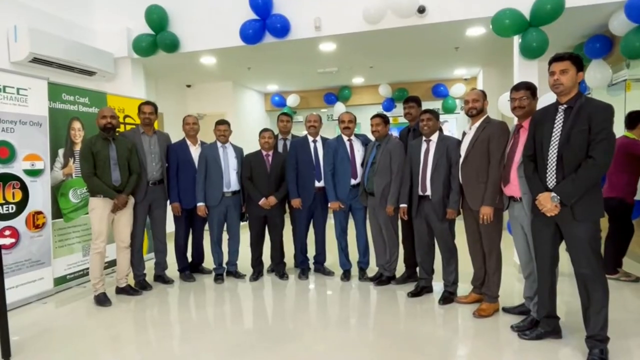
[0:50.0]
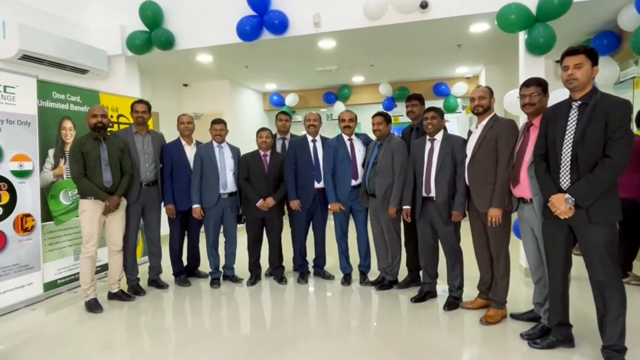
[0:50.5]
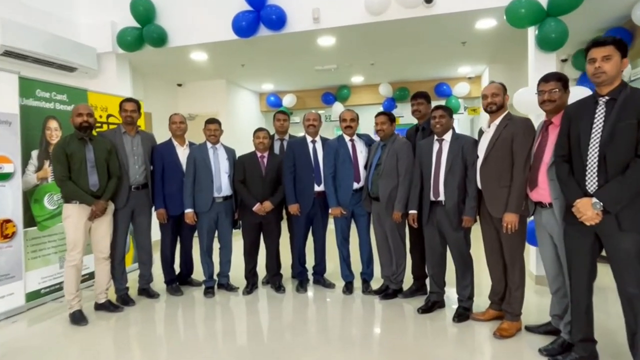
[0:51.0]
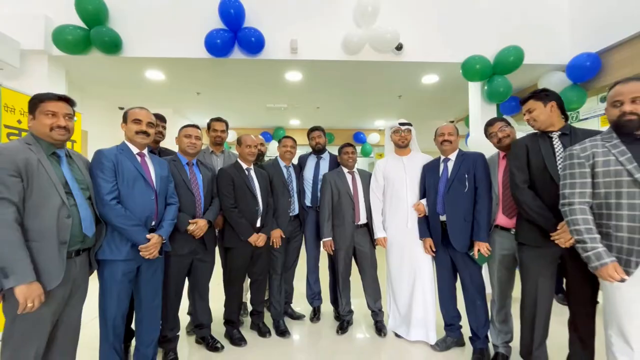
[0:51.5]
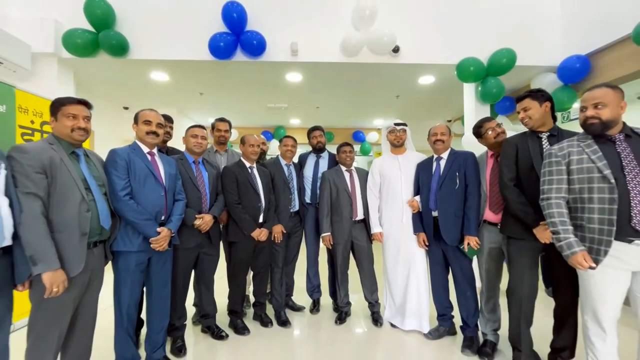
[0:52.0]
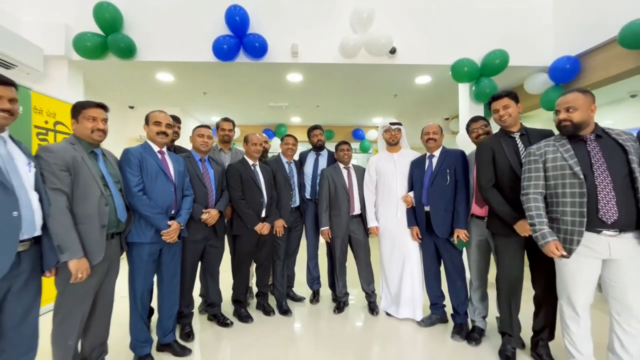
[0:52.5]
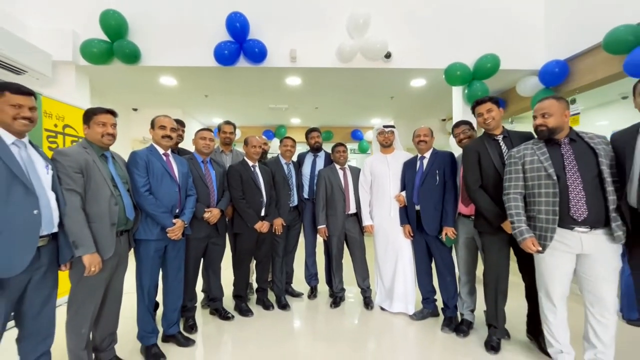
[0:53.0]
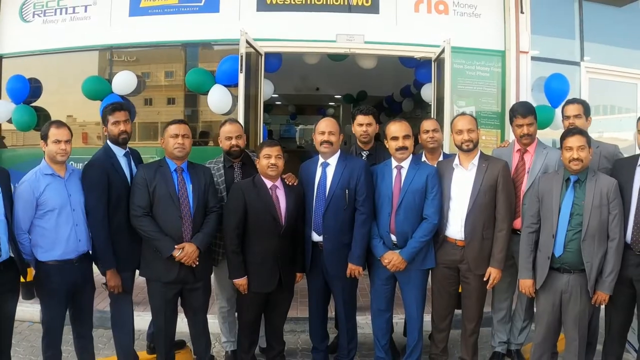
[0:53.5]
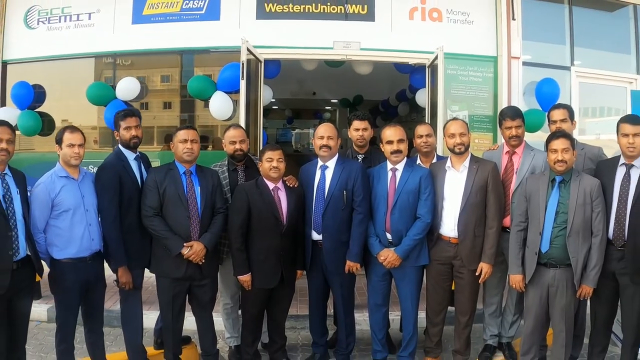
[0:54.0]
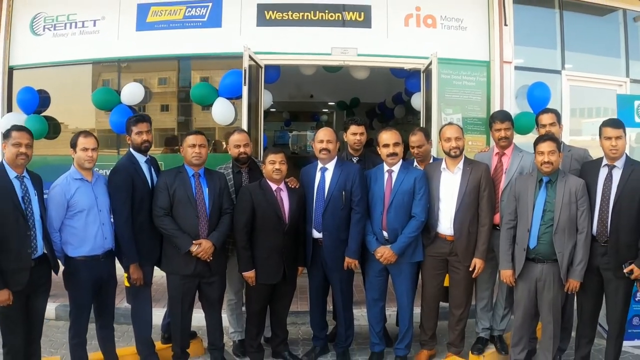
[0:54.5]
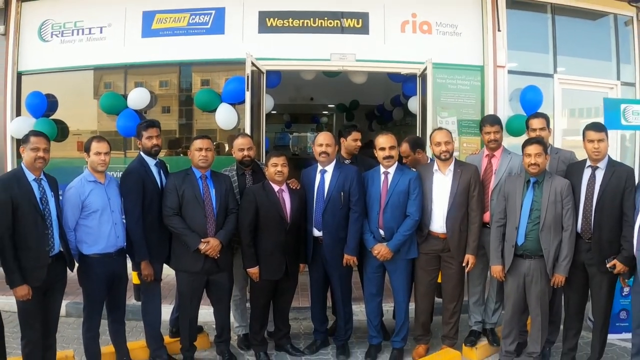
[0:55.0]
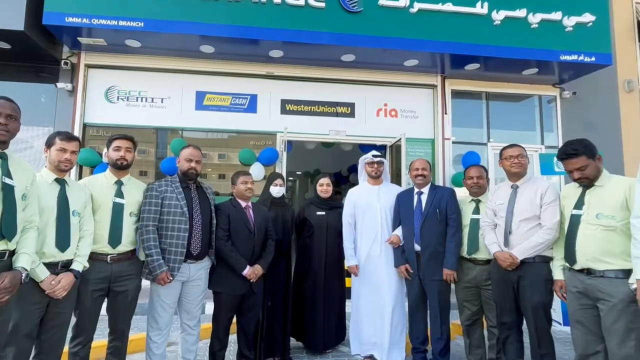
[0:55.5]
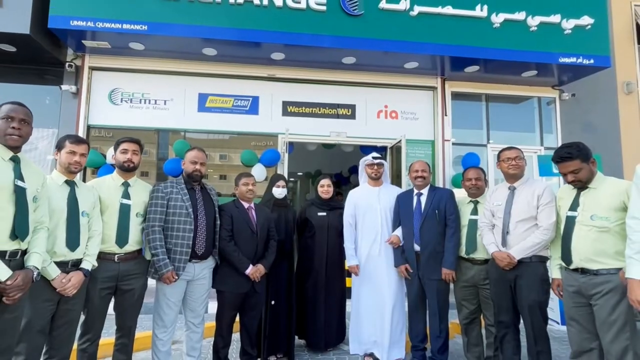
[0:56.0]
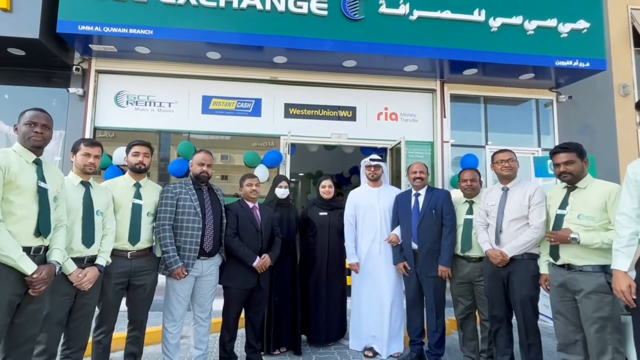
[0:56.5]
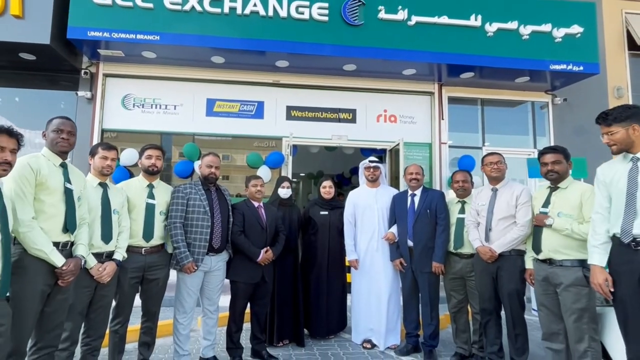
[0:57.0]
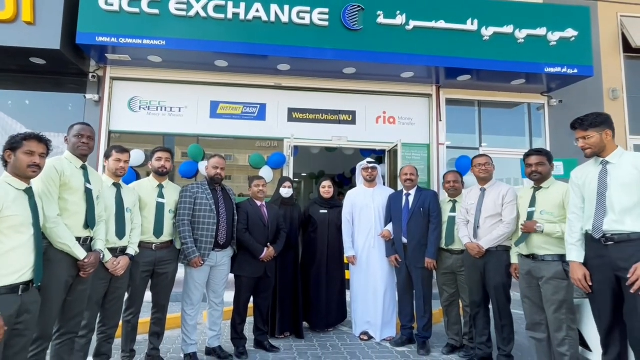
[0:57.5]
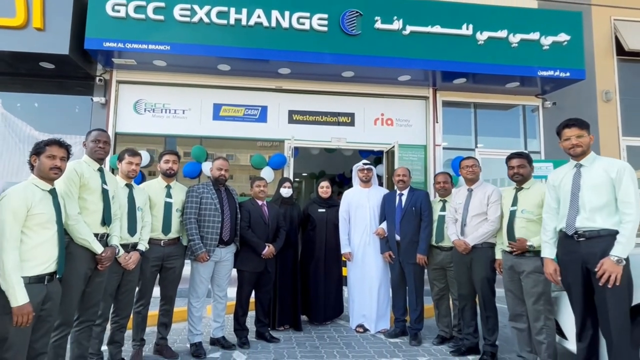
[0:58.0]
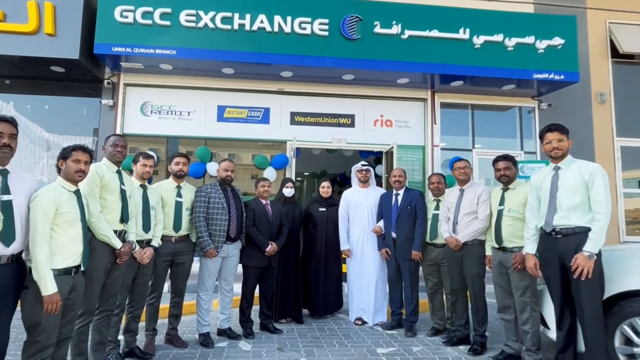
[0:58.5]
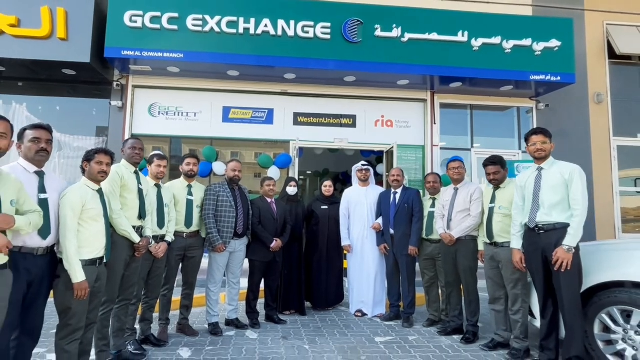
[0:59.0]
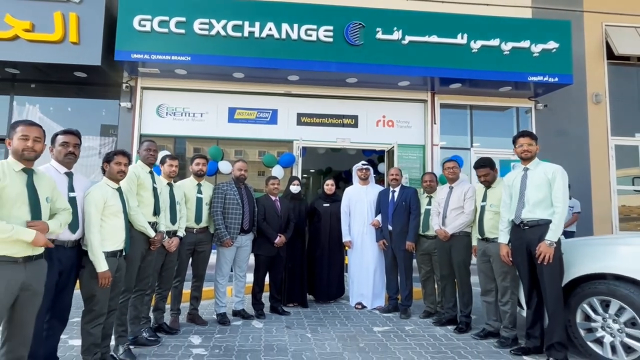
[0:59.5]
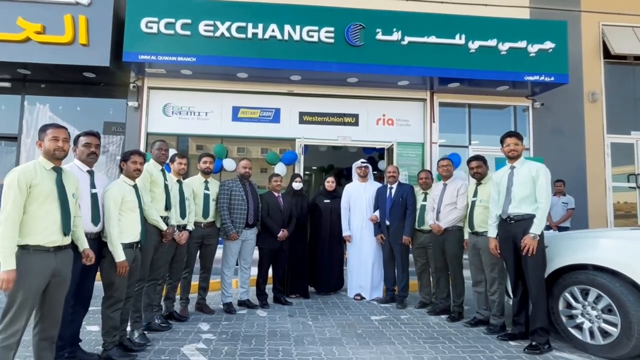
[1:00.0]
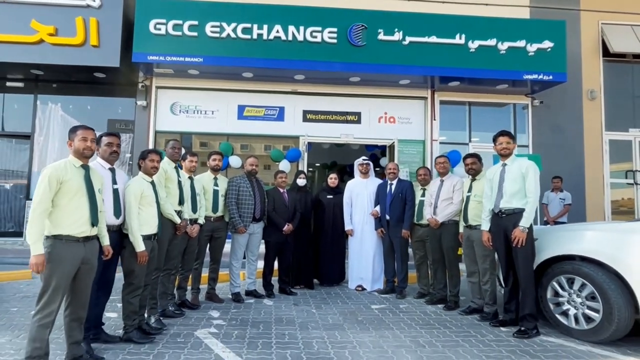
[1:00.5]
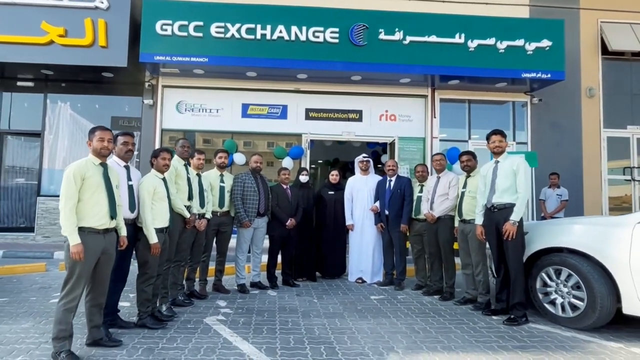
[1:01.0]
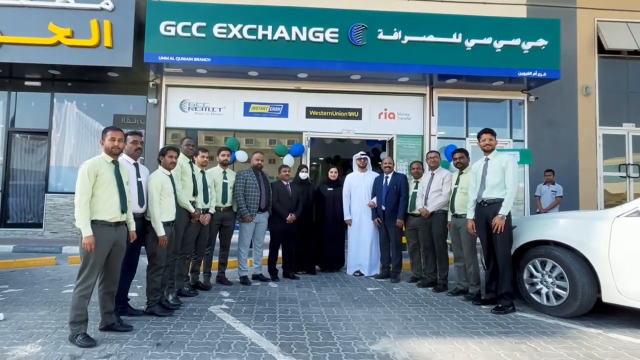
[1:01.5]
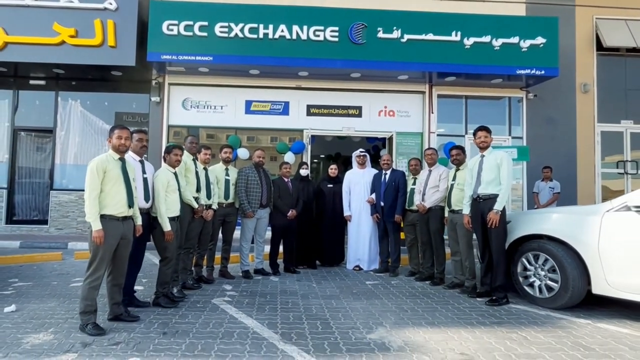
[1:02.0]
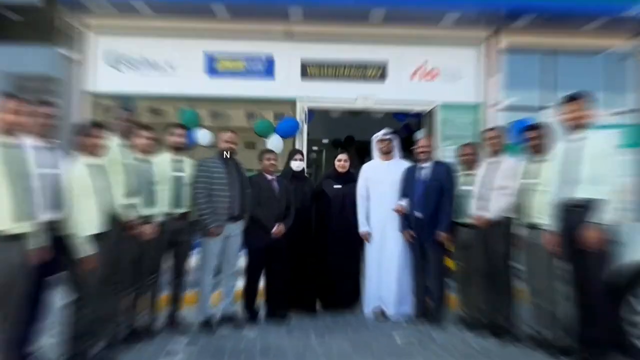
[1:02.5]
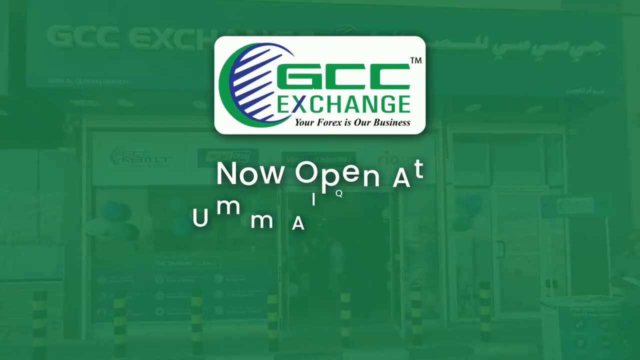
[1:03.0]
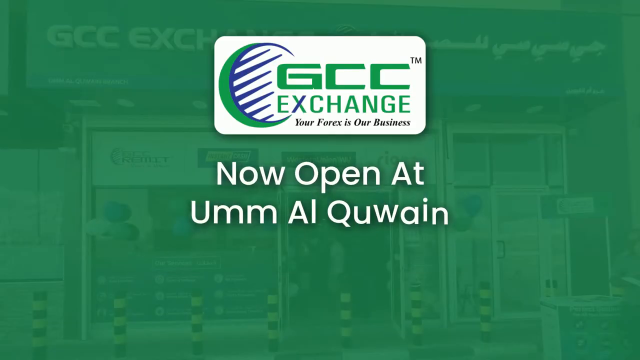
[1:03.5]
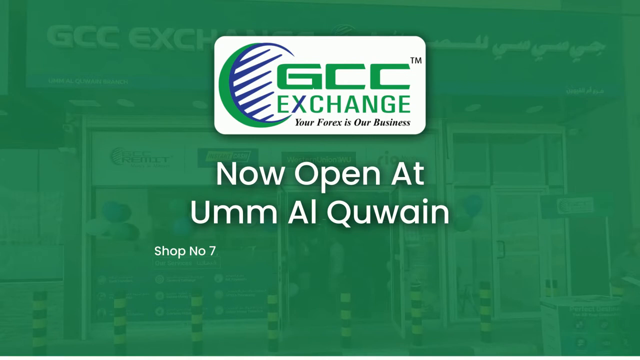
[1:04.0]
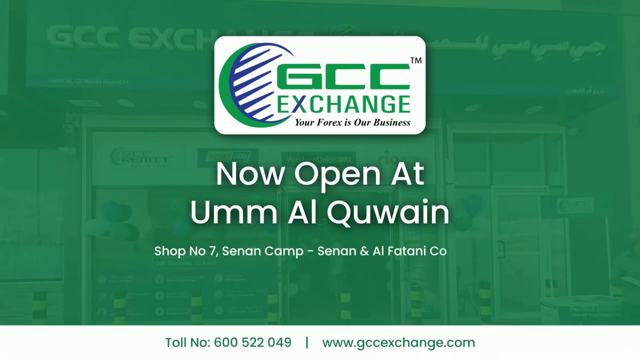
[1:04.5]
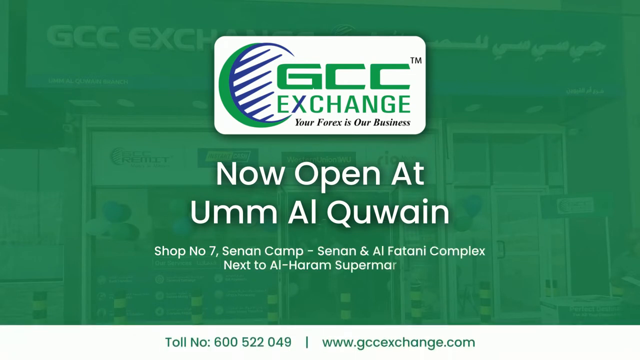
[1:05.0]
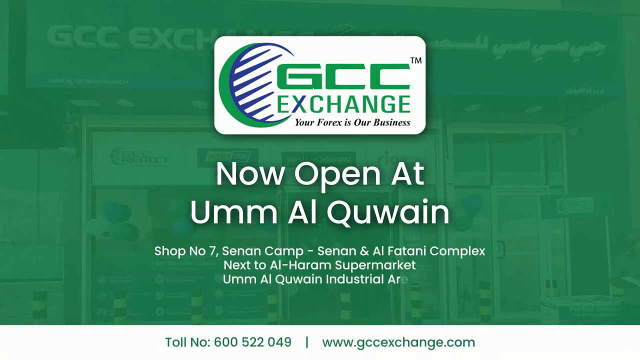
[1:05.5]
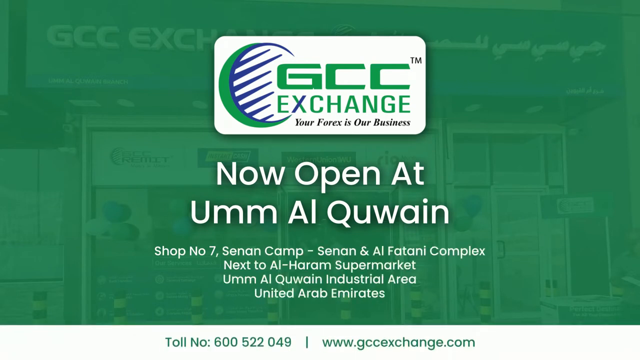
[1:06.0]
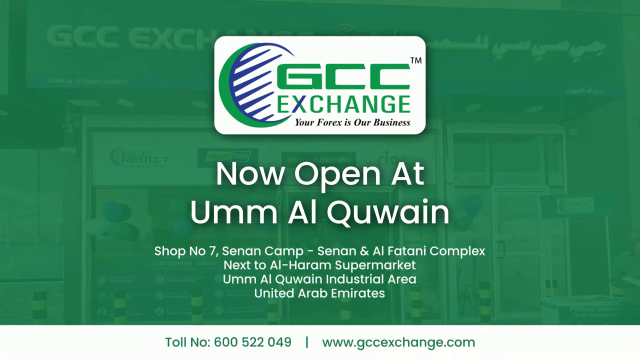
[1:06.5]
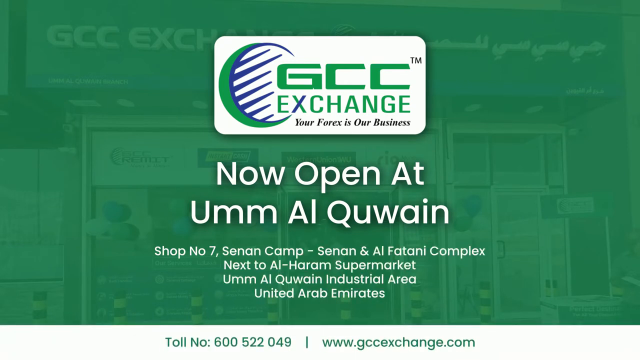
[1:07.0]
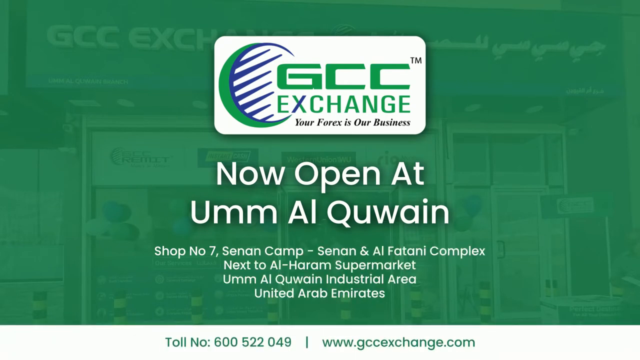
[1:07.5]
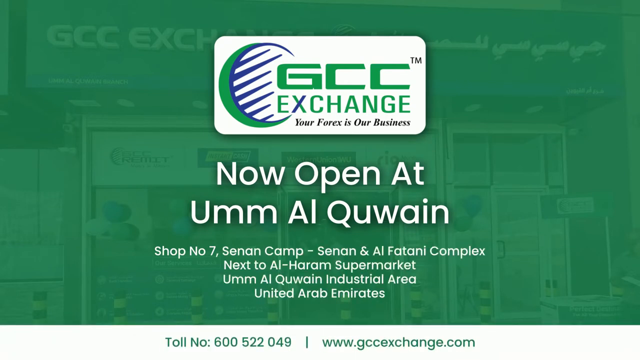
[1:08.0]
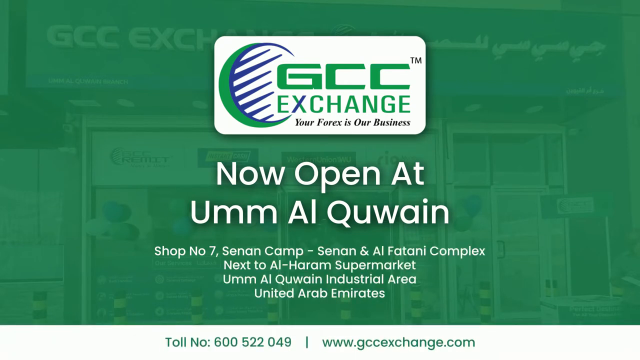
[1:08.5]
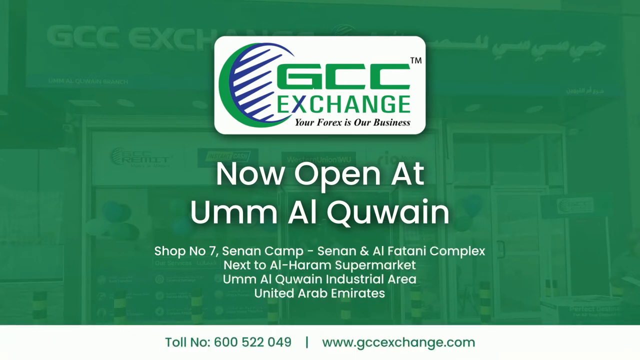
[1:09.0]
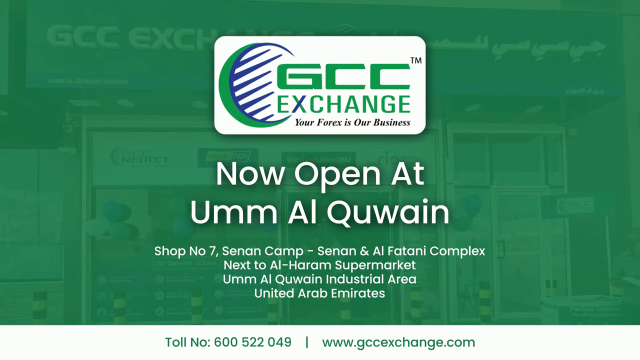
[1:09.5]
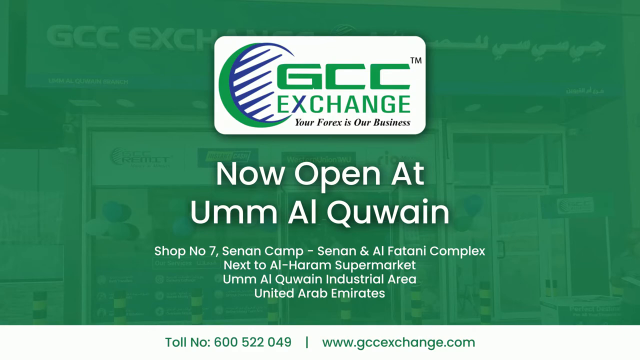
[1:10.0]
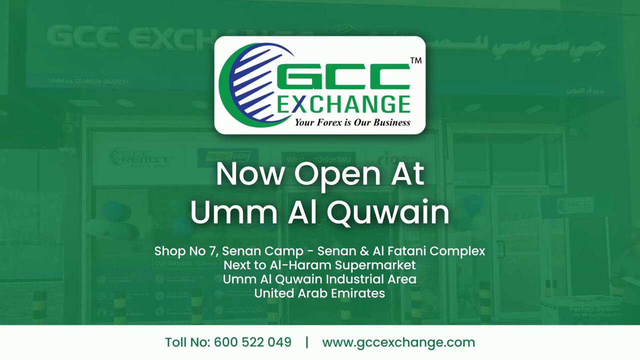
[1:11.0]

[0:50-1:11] A group, possibly board members, owners or managers, is dressed in black and blue suits of various shades. The video cuts to them standing outside the store, looking very excited and proud. Behind them is the GCC Exchange store, with Western Union shown as a sponsor underneath the green GCC Exchange headline. The camera slowly moves away from the people, apparently the store's staff. The video then cuts to an ending screen reading "GCC Exchange, your forex is our business, now opening at UMM Al-Quwain, Shop No. 7, Sinan Camp, Sinan and Al-Fatani Complex, next to Al-Haram Supermarket, UMM Al-Quwain, Industrial Area, United Arab Emirates." A toll-free number is featured at the bottom, along with the website gccexchange.com.